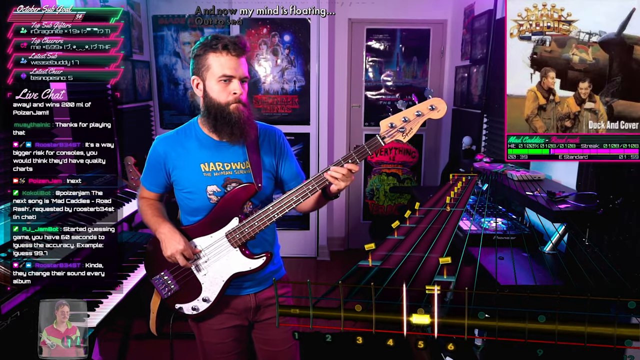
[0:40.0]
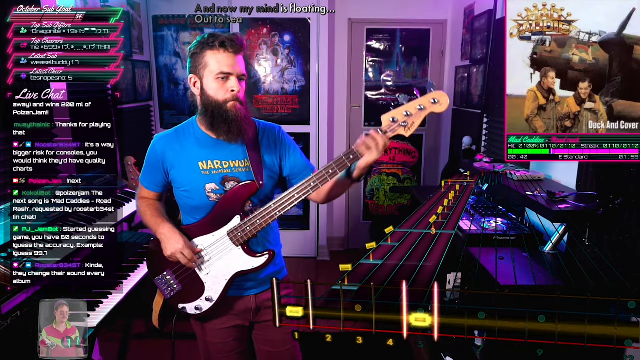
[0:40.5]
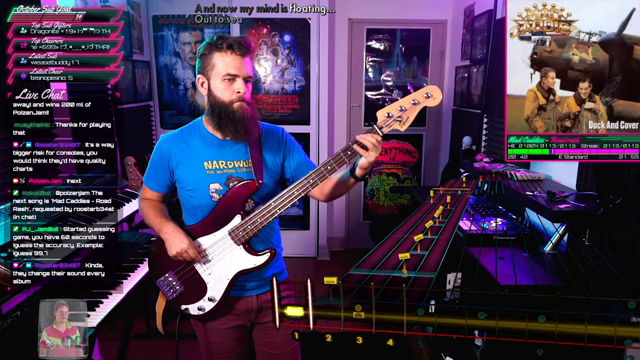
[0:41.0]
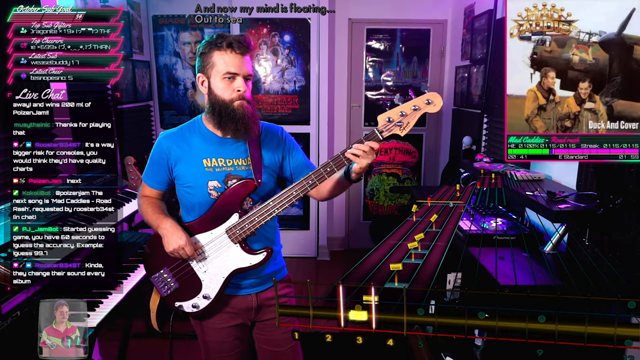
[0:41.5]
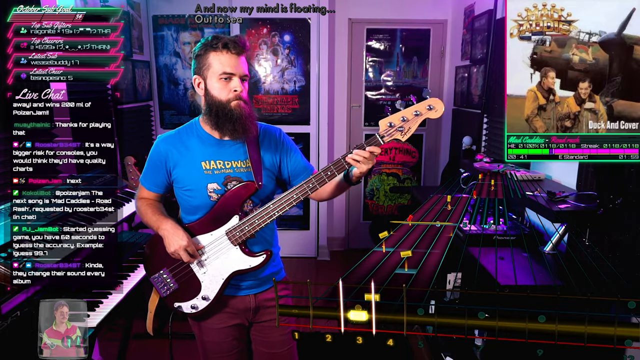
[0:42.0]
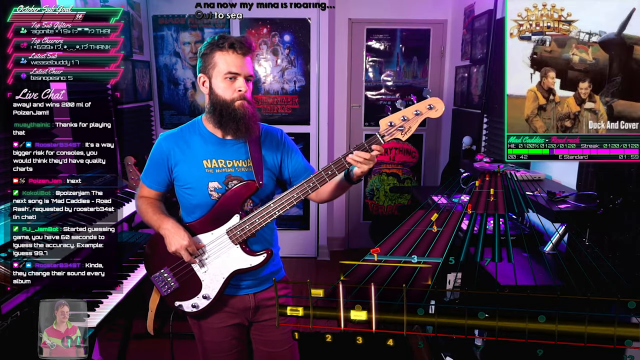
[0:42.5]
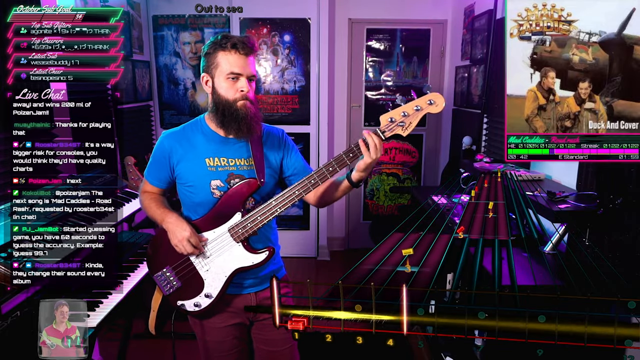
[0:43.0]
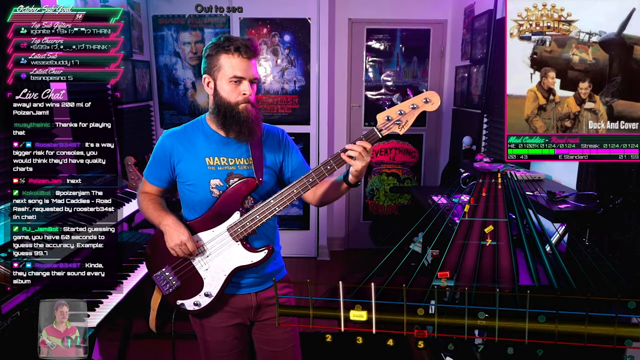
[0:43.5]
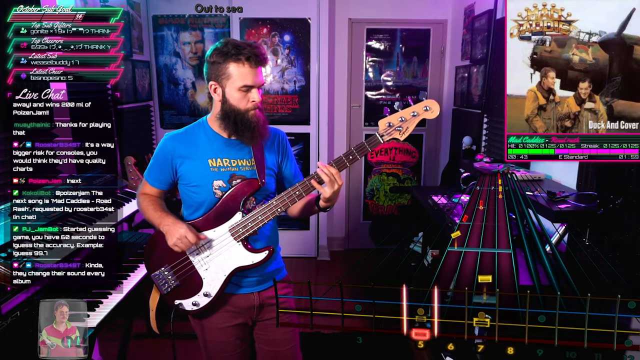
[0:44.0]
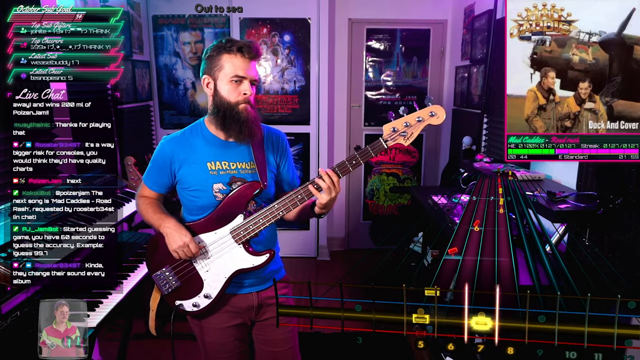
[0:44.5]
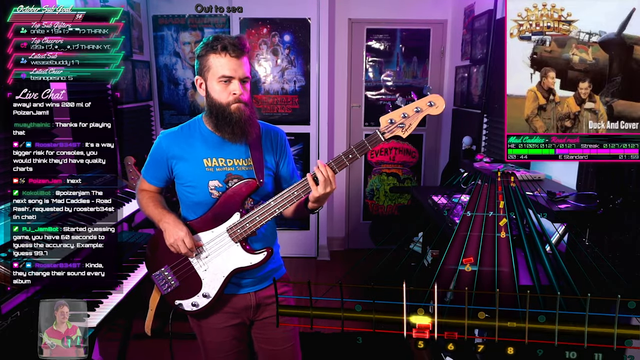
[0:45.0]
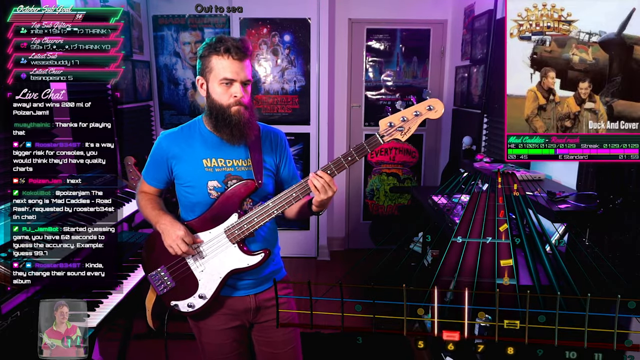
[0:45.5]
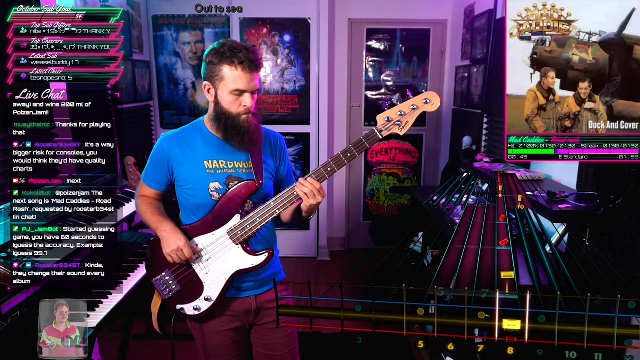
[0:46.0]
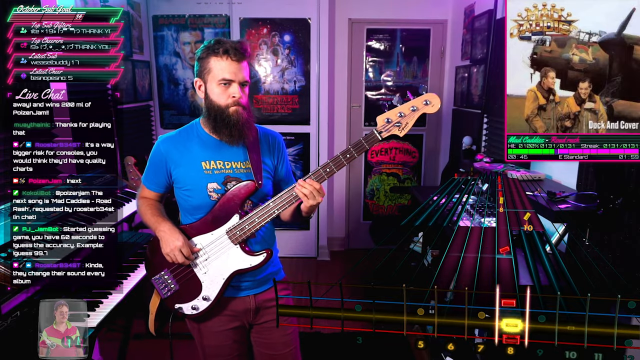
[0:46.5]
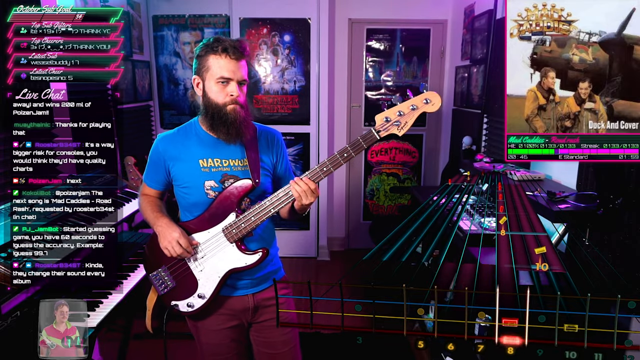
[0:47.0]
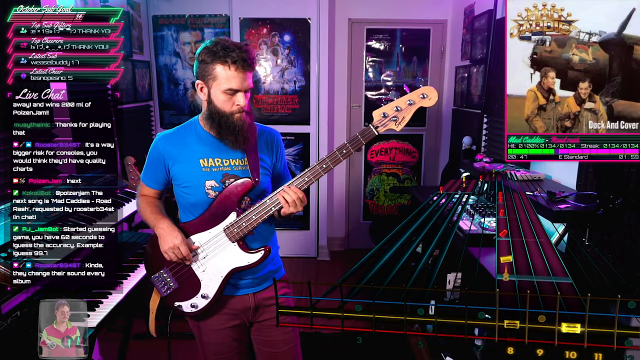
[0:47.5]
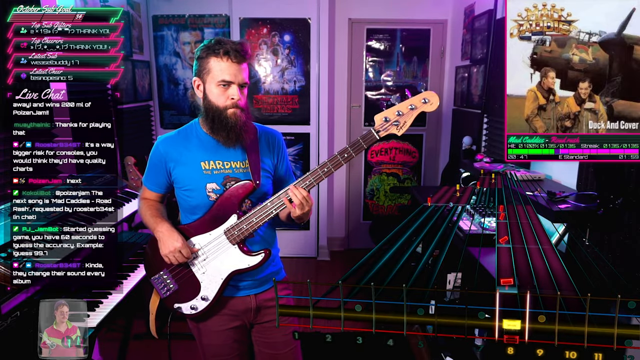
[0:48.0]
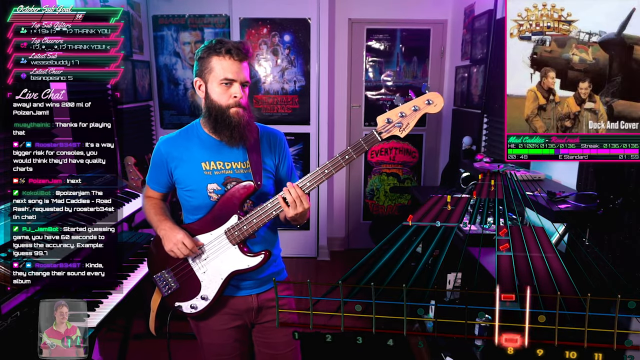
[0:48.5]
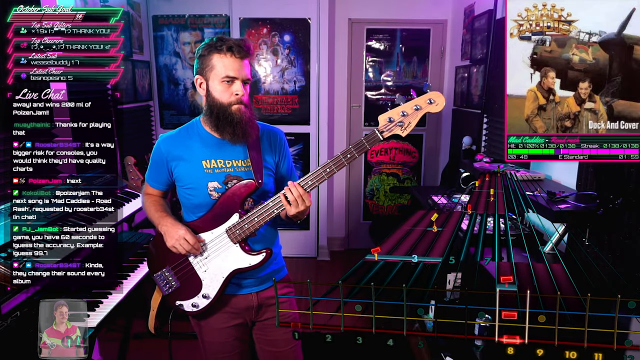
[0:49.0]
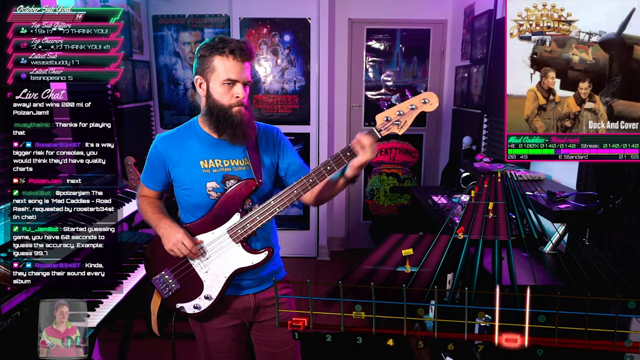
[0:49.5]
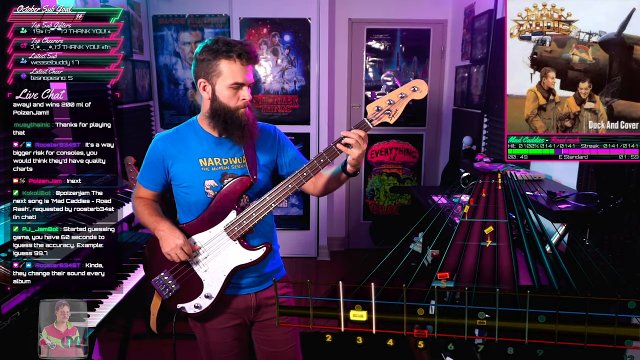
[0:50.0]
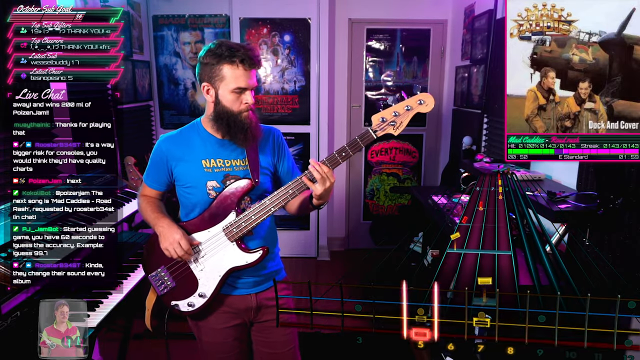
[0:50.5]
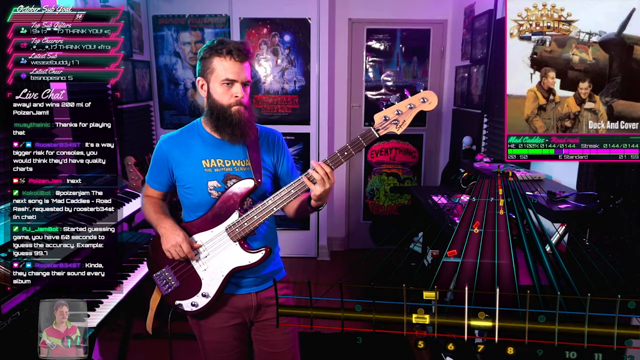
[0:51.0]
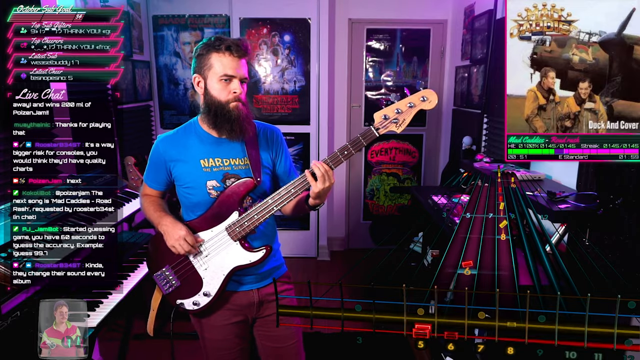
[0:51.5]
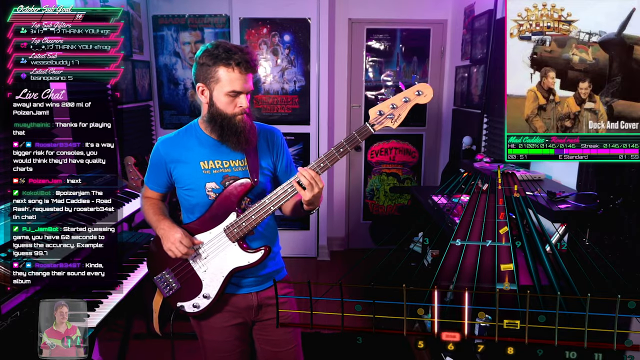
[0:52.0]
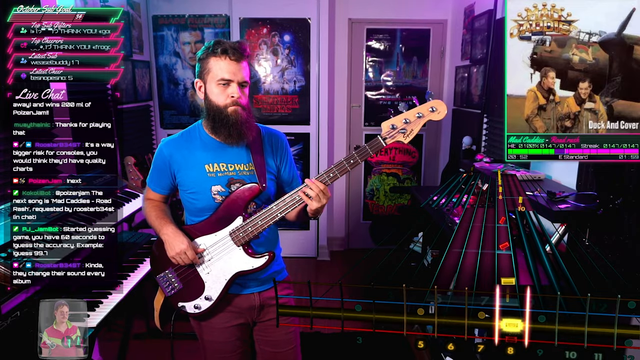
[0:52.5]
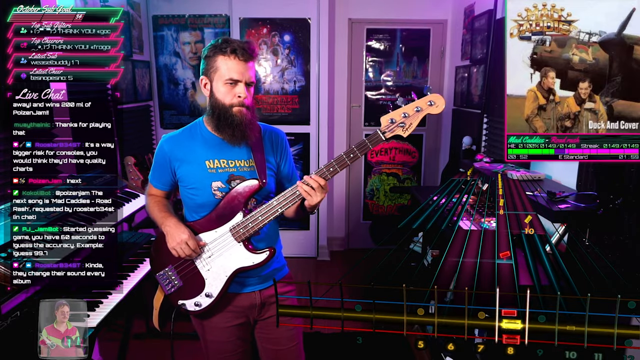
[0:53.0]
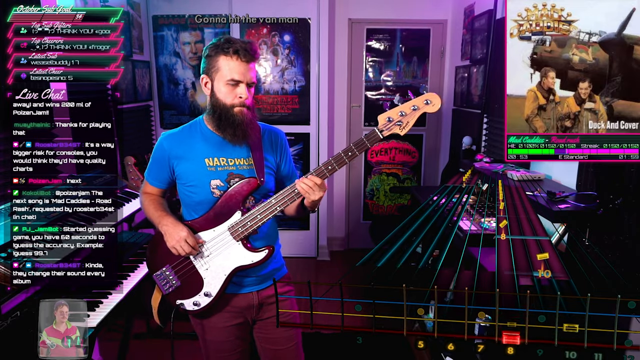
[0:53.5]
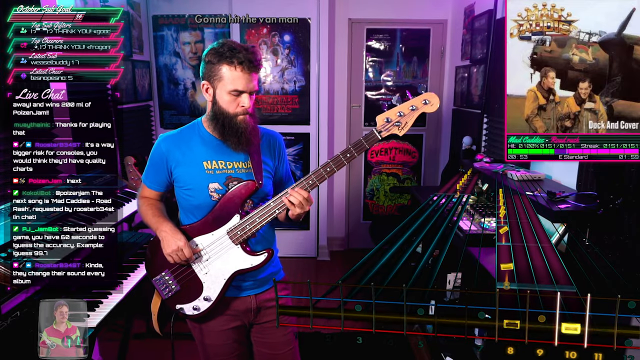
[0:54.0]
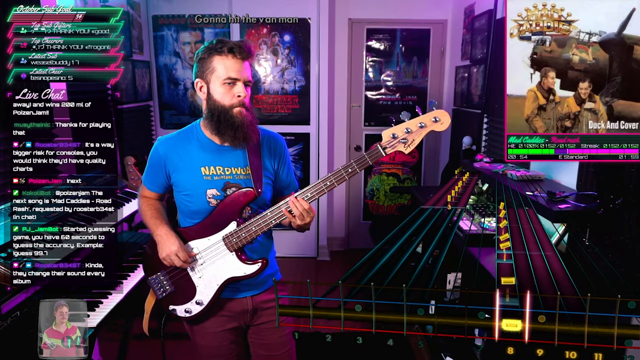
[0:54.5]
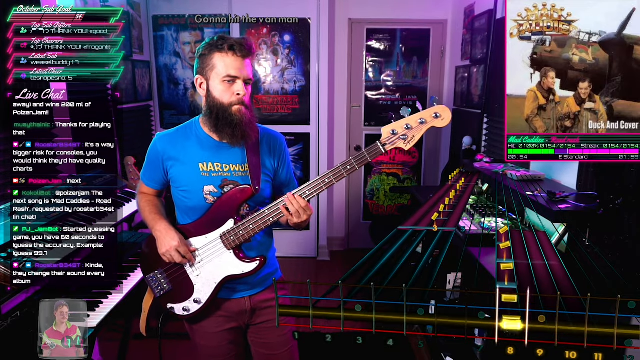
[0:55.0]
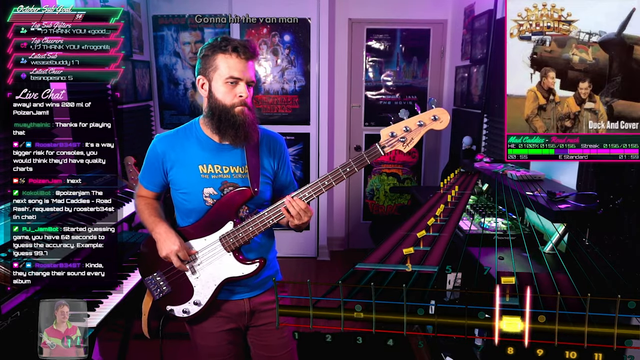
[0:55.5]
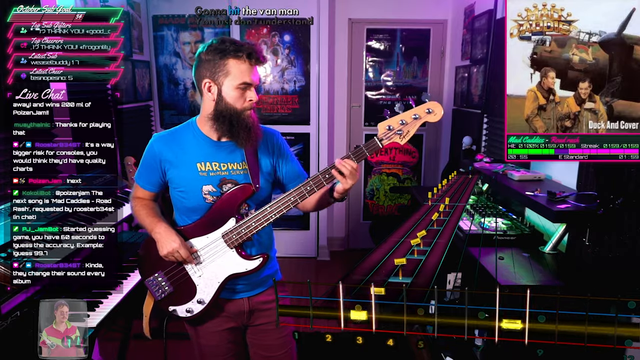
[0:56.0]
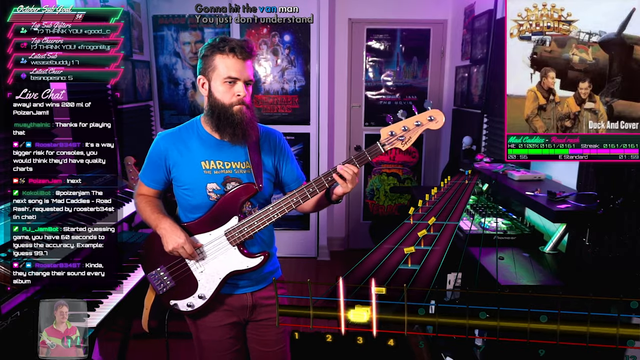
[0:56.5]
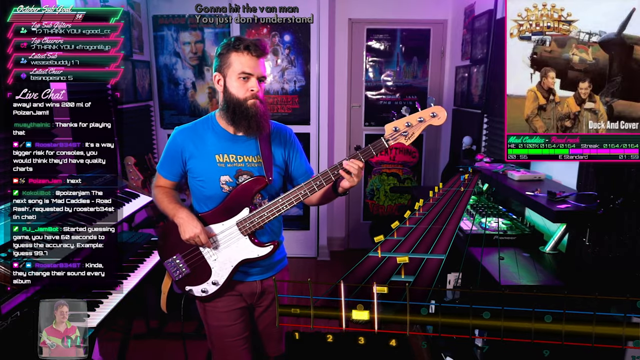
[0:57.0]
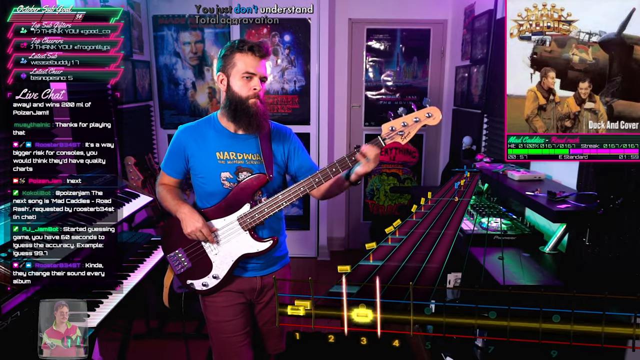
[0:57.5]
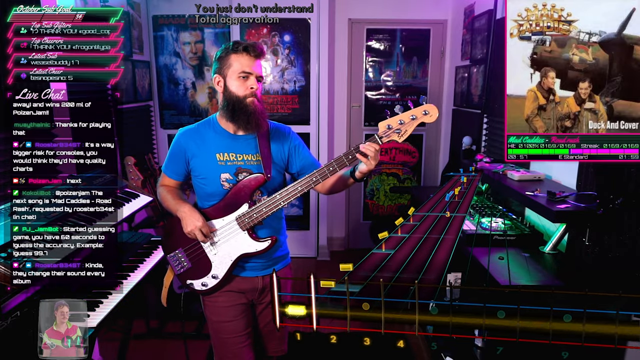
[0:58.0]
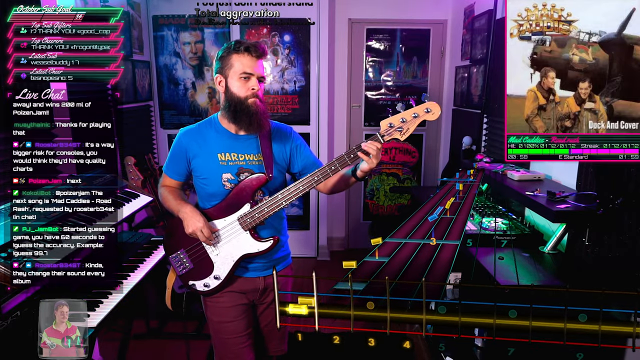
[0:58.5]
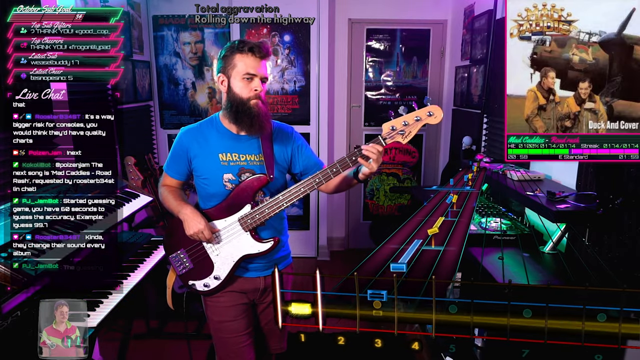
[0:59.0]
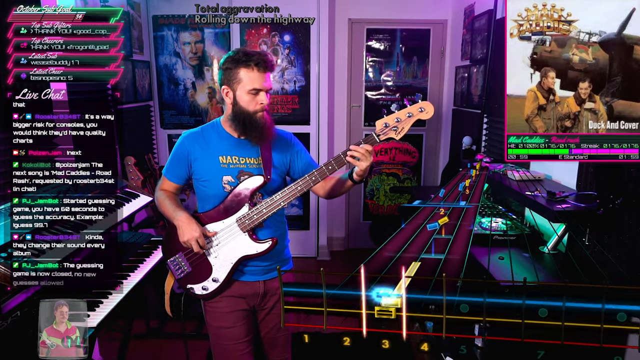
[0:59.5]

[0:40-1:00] He gets more into the song, hitting the notes and not paying attention to the live chat. At the bottom of the album cover in the upper right-hand corner of the video, a bar shows the progression of the song, apparently indicating its length. Above him there is text that looks like the song's lyrics, but he is not singing; he is just playing the guitar.